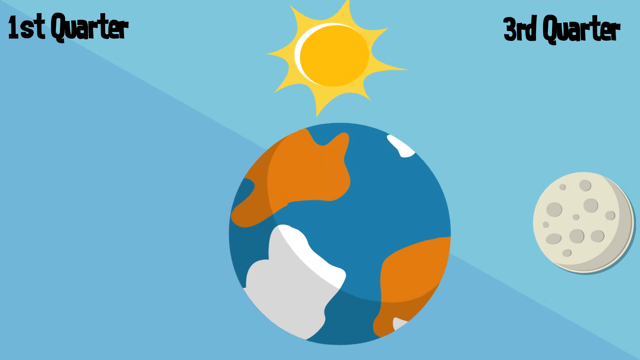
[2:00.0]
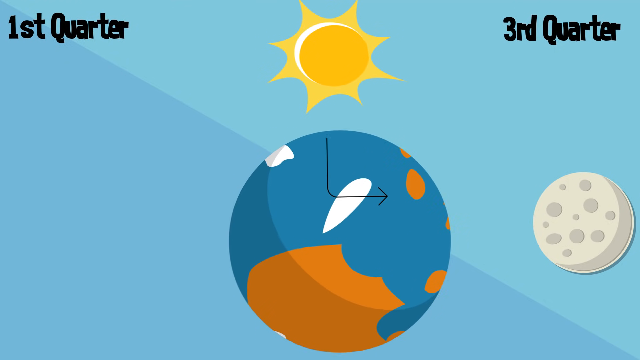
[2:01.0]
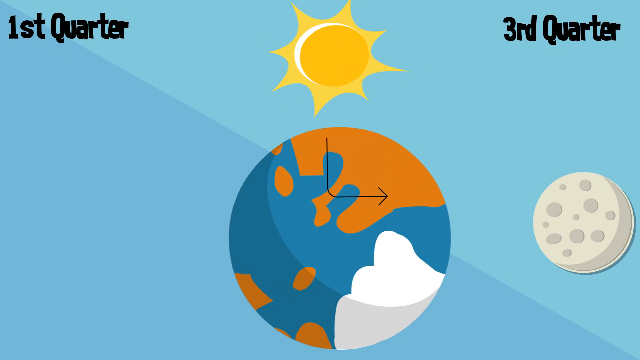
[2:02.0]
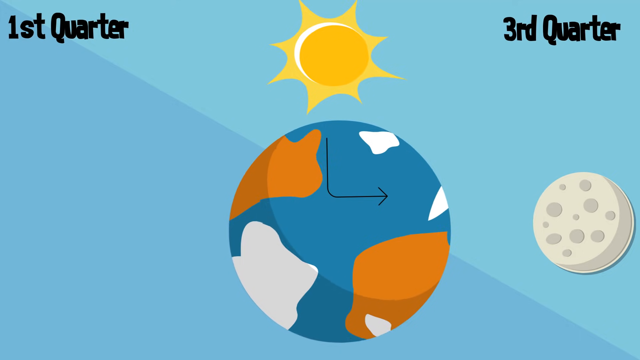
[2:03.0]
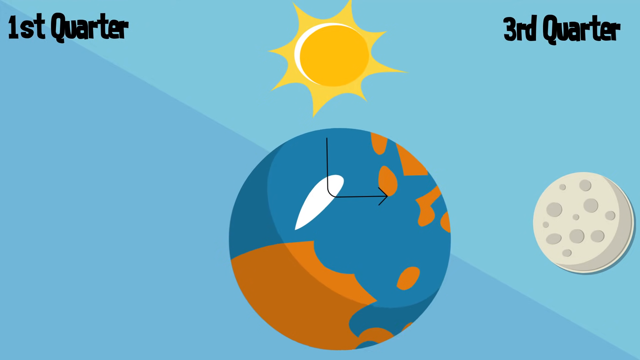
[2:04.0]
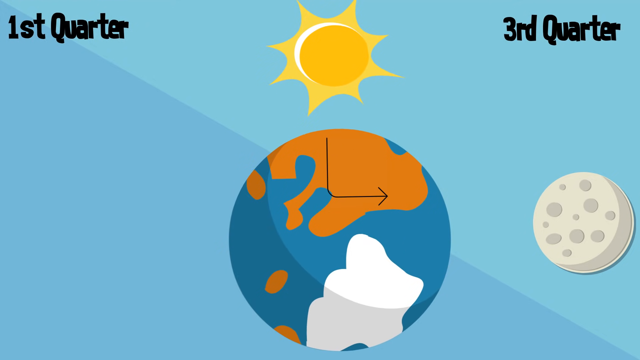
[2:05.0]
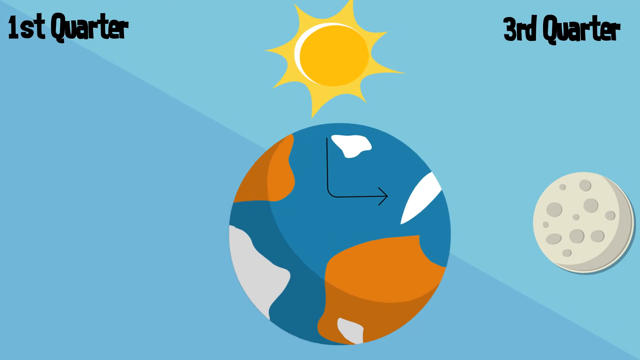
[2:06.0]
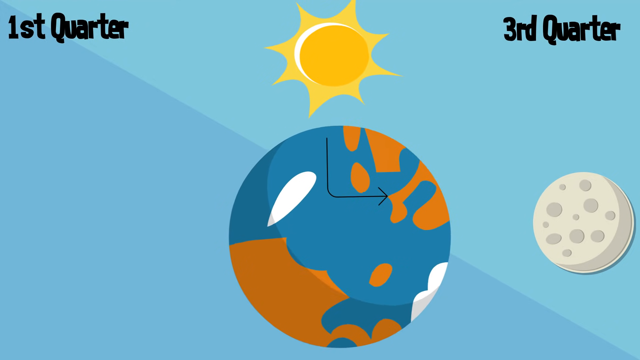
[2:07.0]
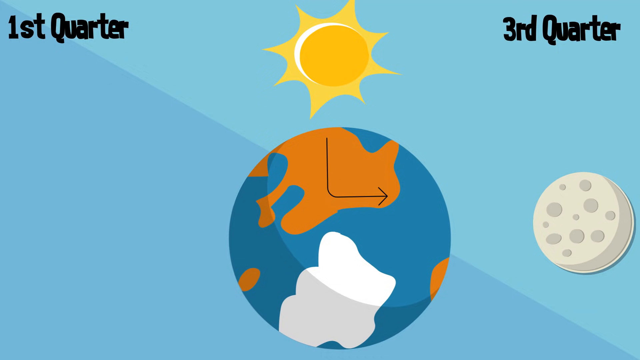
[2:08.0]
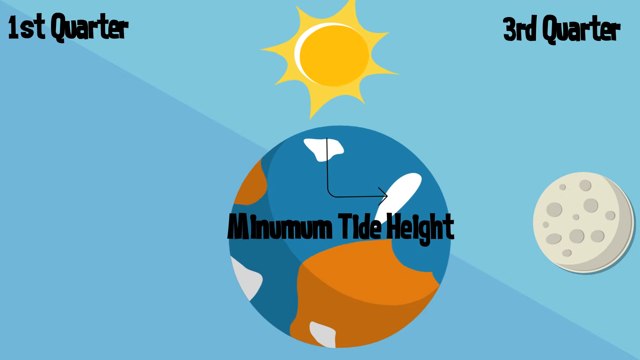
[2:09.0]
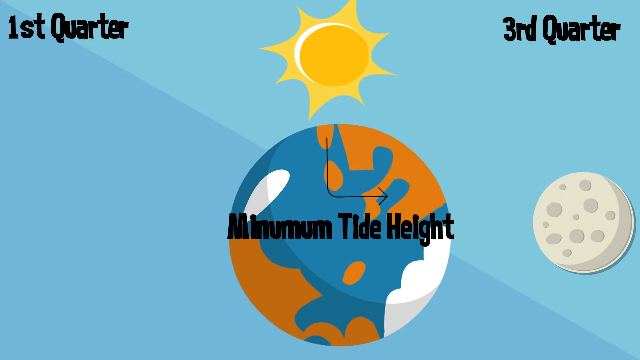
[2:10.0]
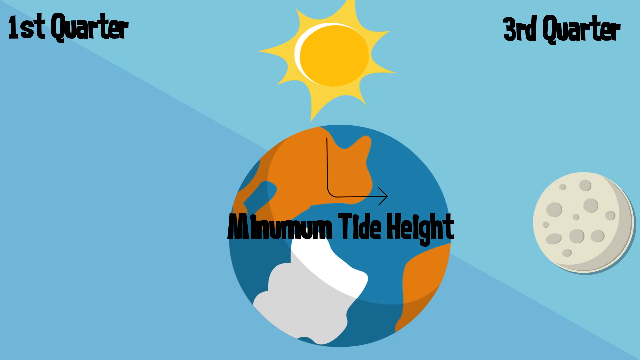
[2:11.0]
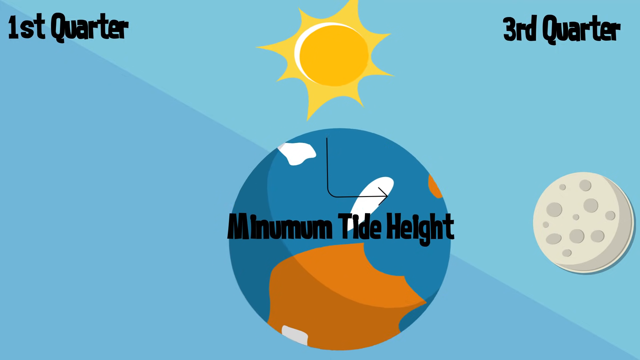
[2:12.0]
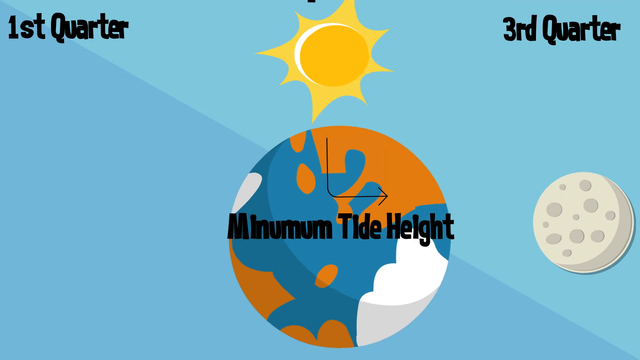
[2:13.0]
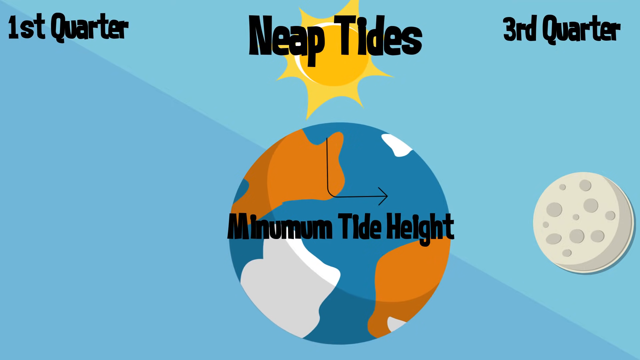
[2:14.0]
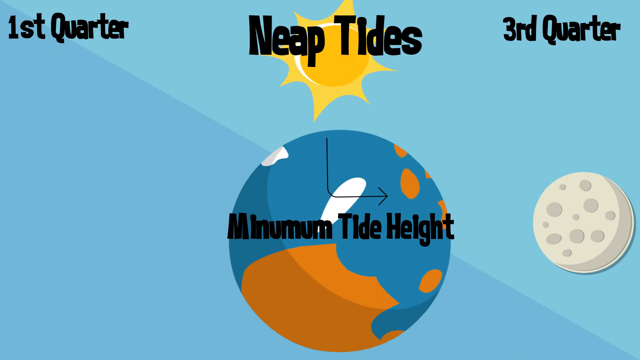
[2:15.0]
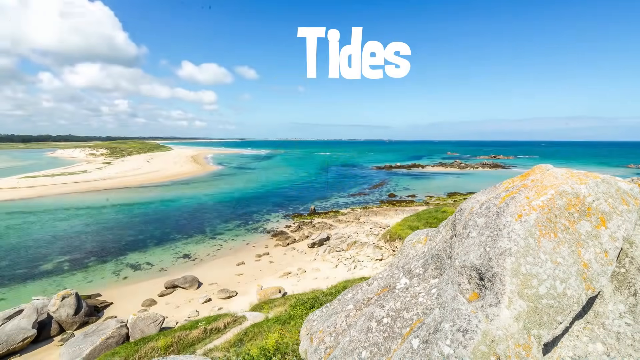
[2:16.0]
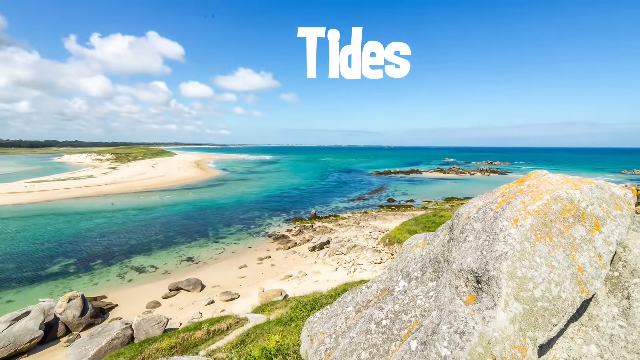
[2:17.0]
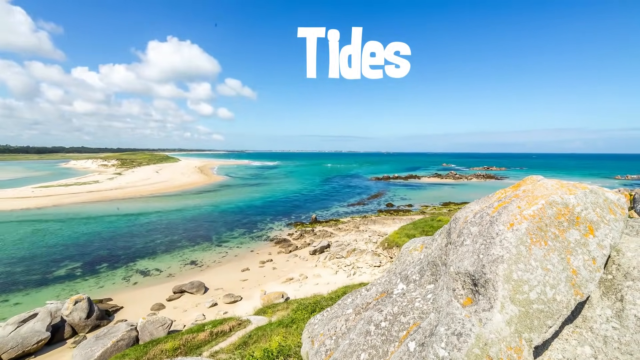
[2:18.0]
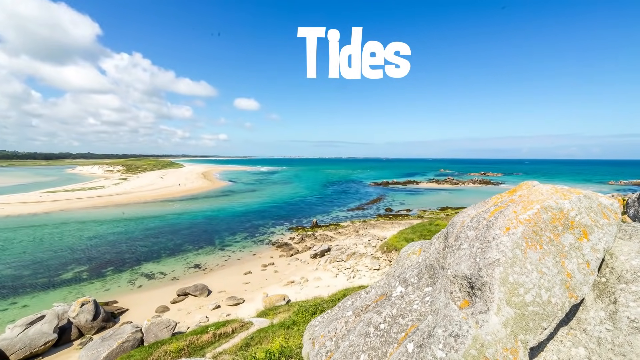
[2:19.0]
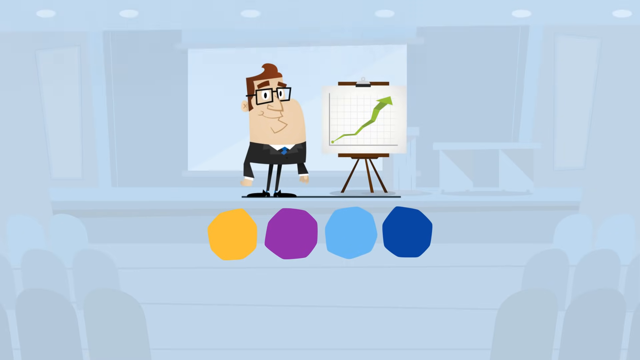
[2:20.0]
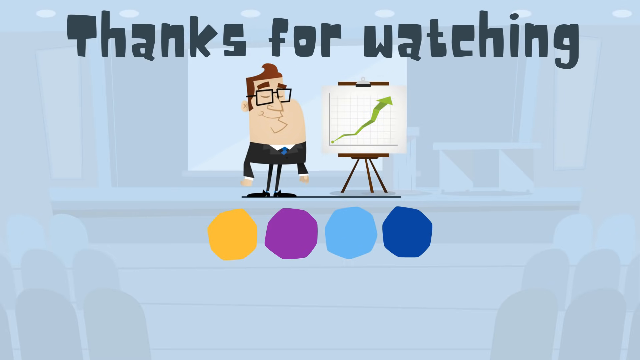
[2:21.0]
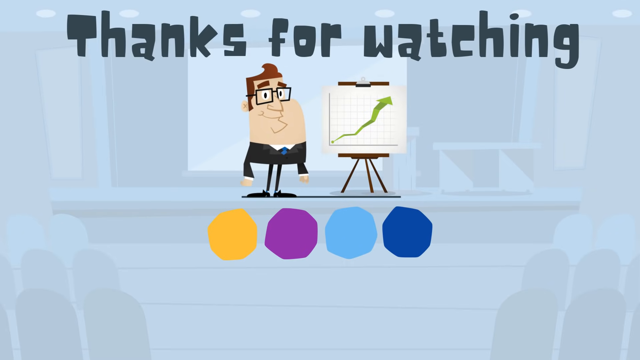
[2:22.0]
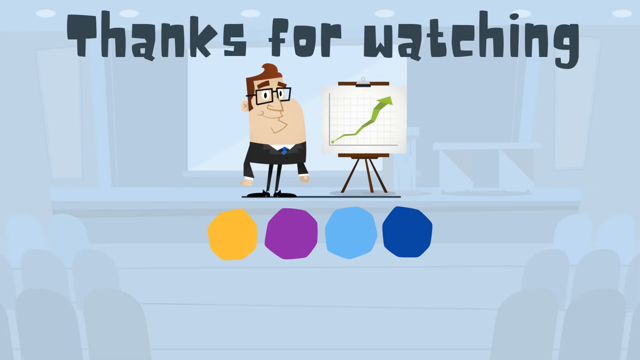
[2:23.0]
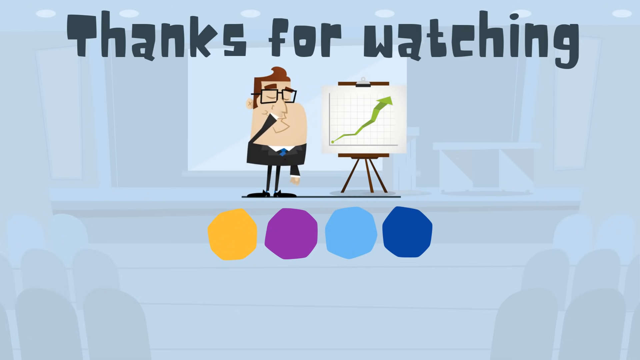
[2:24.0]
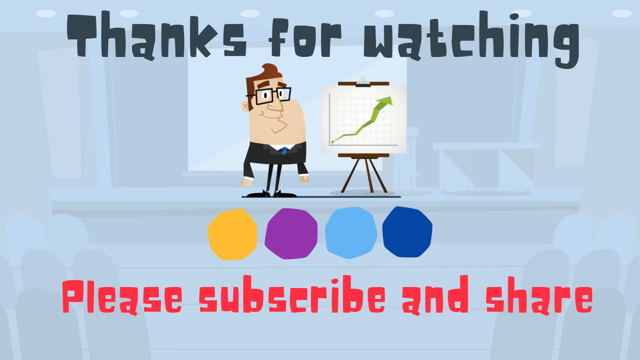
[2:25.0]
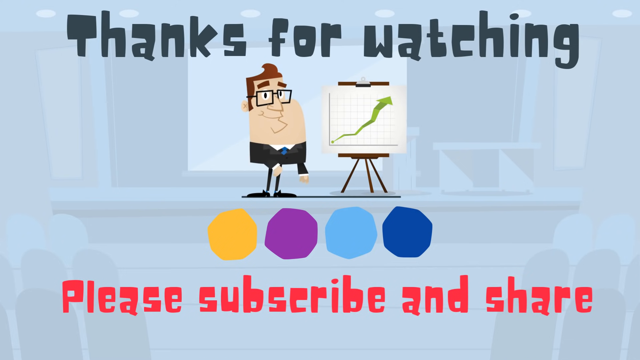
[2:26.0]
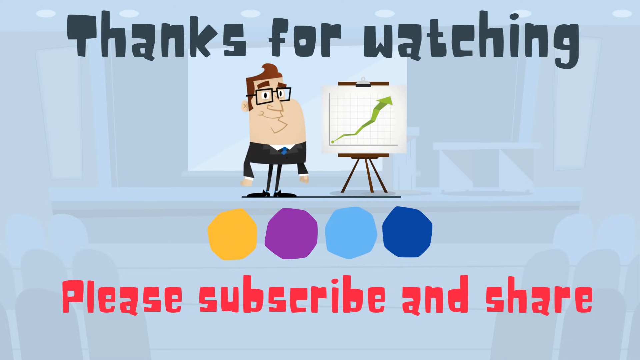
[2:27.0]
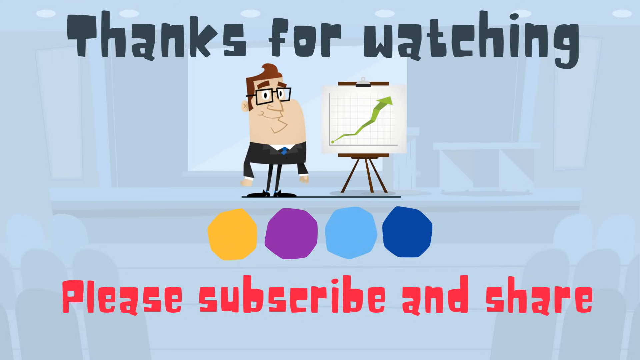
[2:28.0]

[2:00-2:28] The Earth continues to spin, with an L-shaped arrow on the top center part of the Earth. A title appears in the center of the Earth that says "minimum tide height", and as the Earth keeps spinning, a title appears from the top that says "Neap tides". The scene then changes to the first view of the video, a beach shore with islands, apparently on an island, in time-lapse. Clouds move very fast in the top left area of the sky, and at the top center is the title "tides". The scene changes to a "thanks for watching" screen with a cartoon character of a man wearing glasses next to a chart; the chart, on the right side, has an arrow going upward. Captions at the bottom say "please subscribe and share".